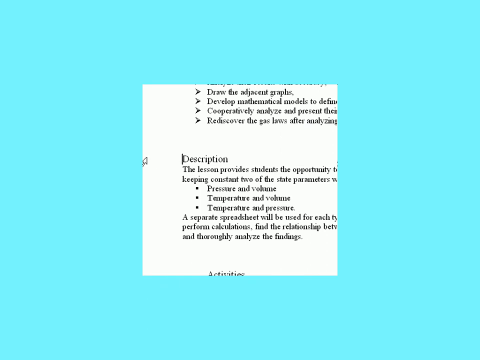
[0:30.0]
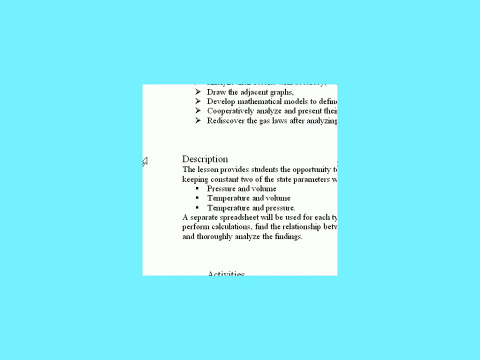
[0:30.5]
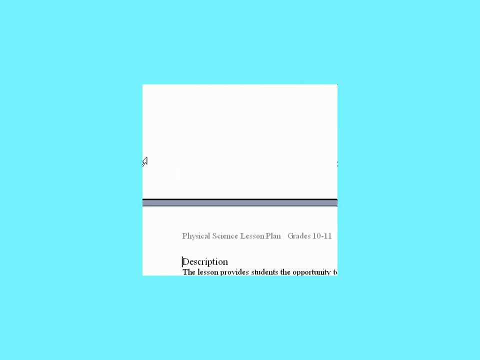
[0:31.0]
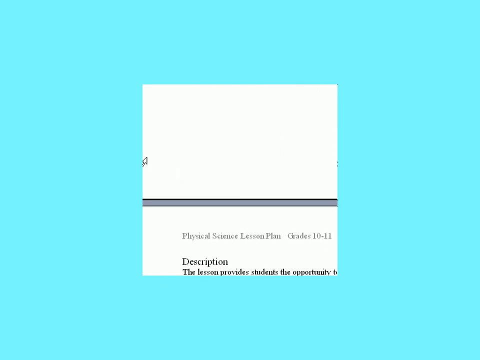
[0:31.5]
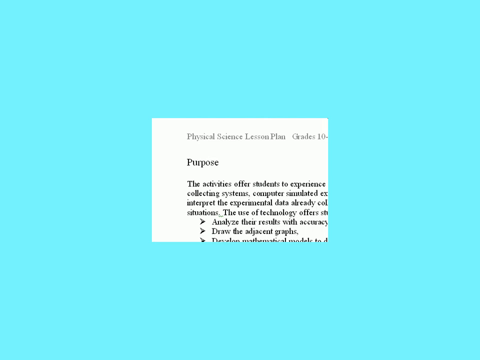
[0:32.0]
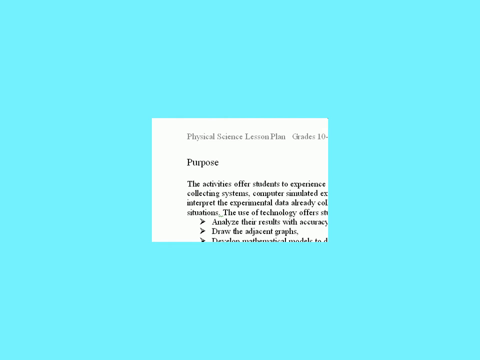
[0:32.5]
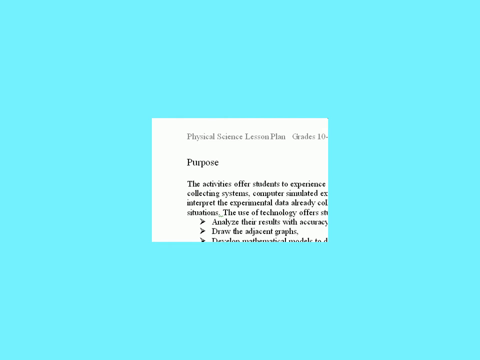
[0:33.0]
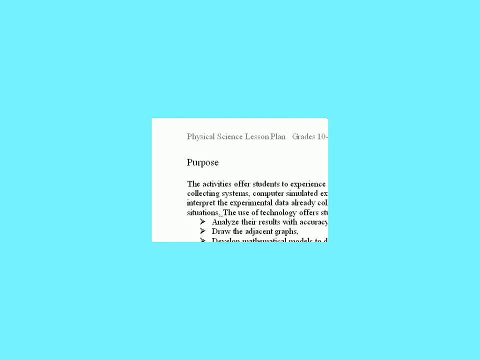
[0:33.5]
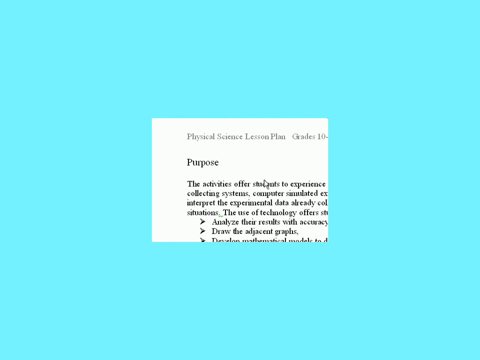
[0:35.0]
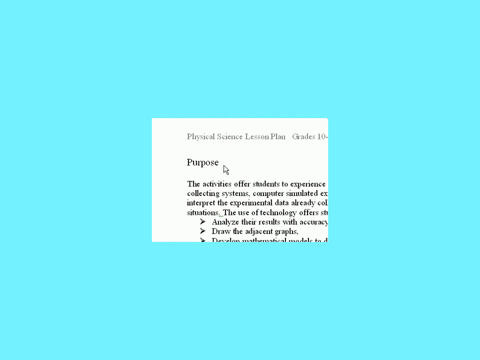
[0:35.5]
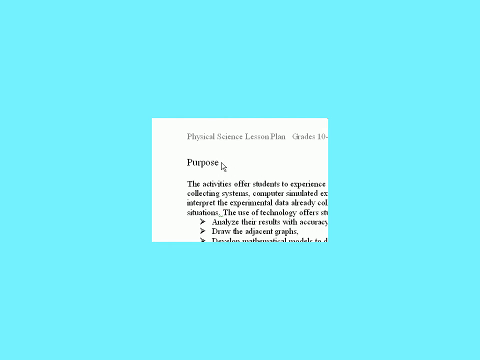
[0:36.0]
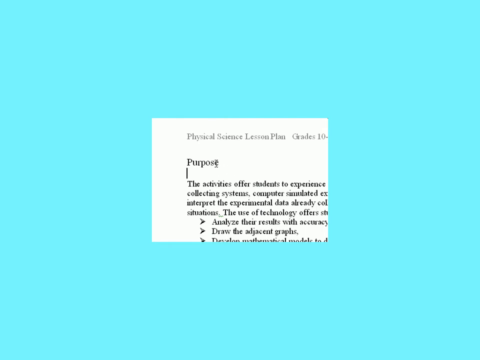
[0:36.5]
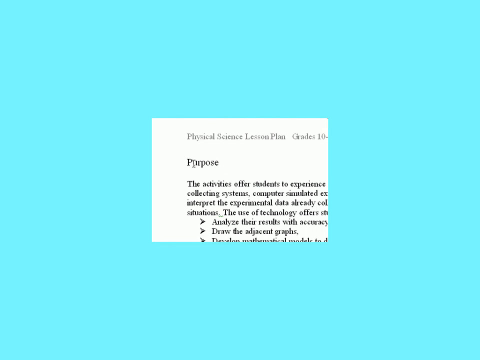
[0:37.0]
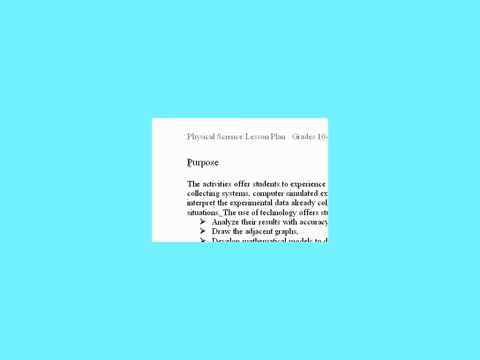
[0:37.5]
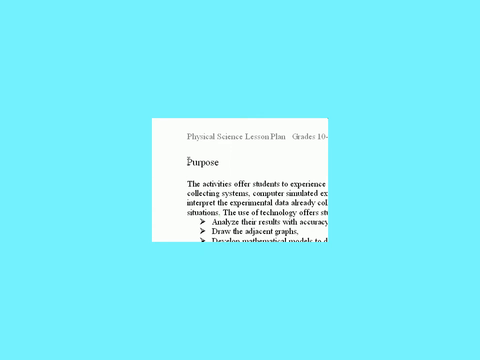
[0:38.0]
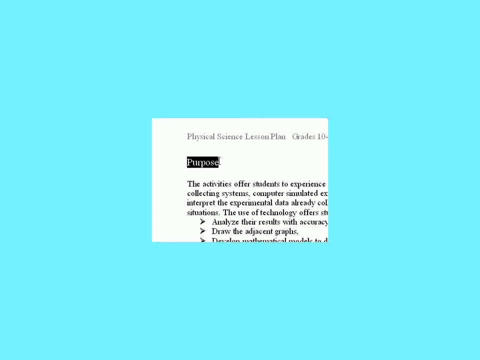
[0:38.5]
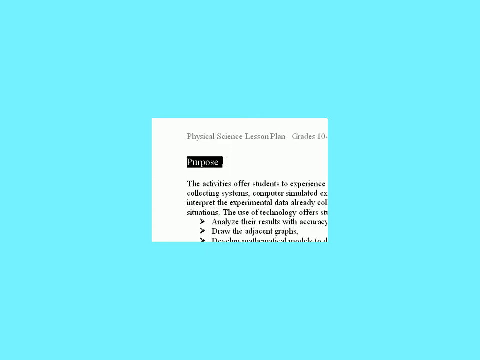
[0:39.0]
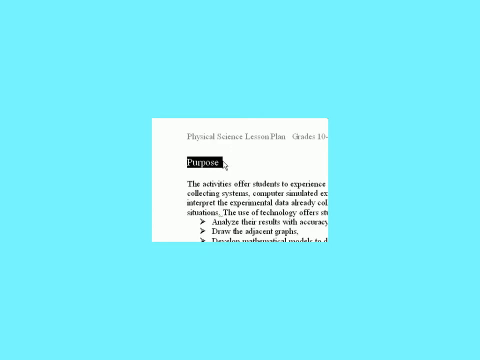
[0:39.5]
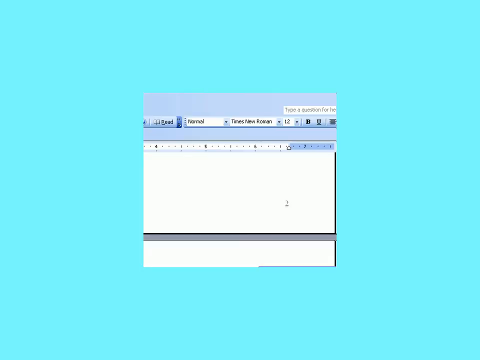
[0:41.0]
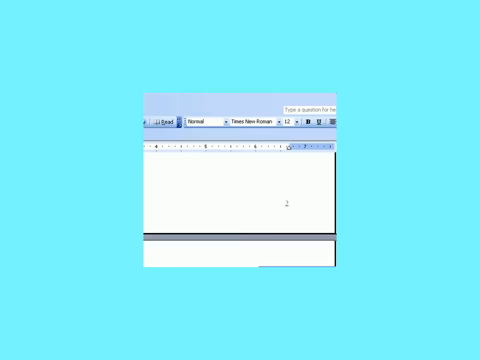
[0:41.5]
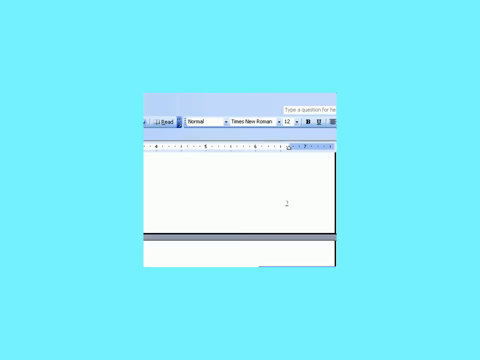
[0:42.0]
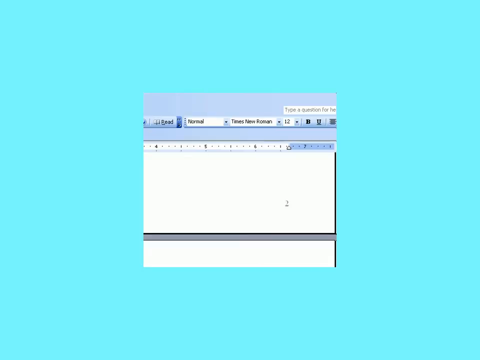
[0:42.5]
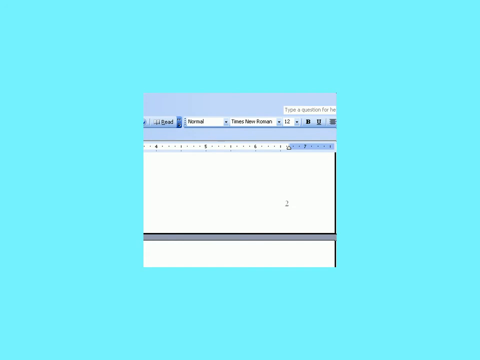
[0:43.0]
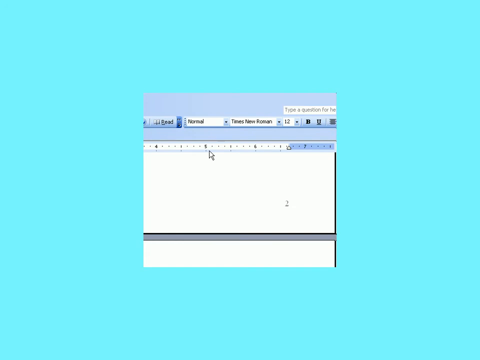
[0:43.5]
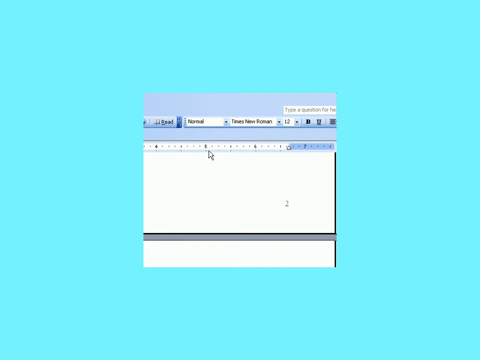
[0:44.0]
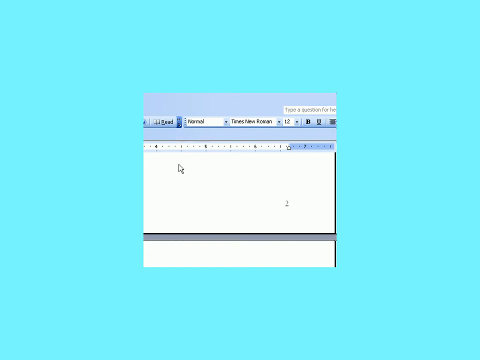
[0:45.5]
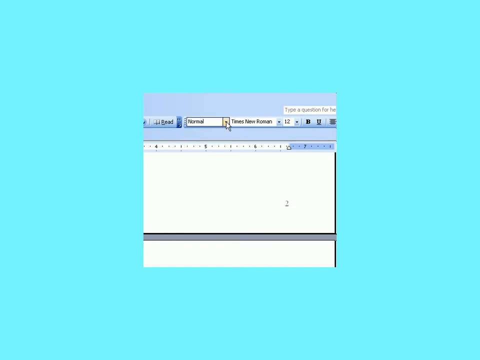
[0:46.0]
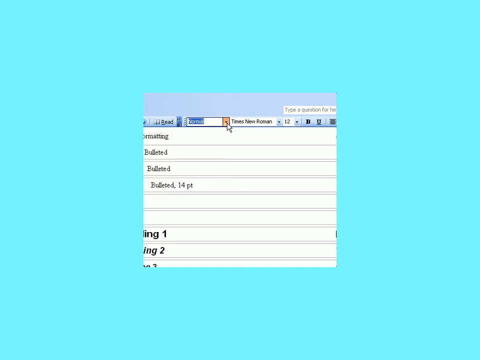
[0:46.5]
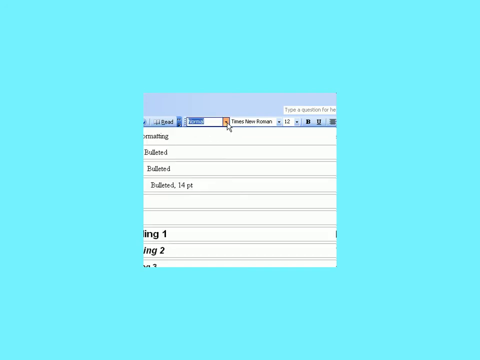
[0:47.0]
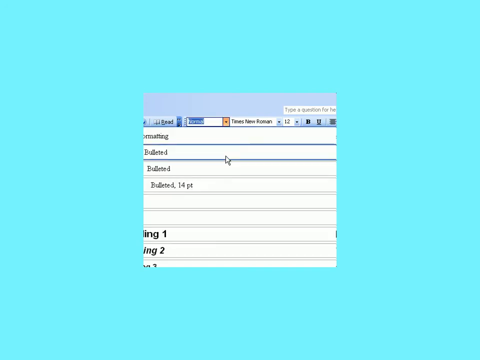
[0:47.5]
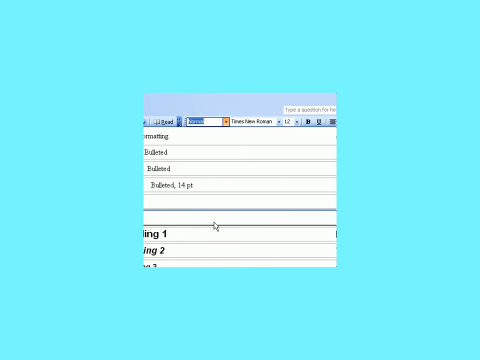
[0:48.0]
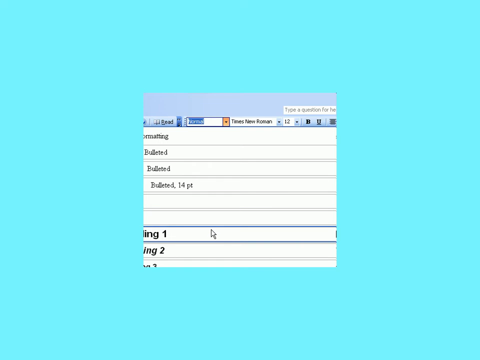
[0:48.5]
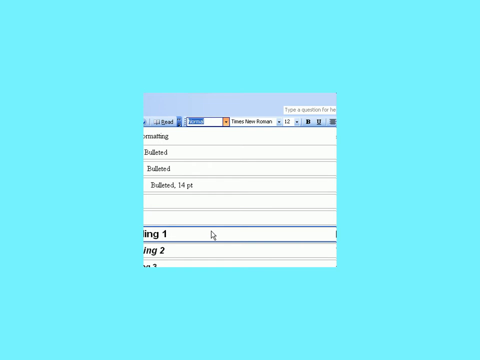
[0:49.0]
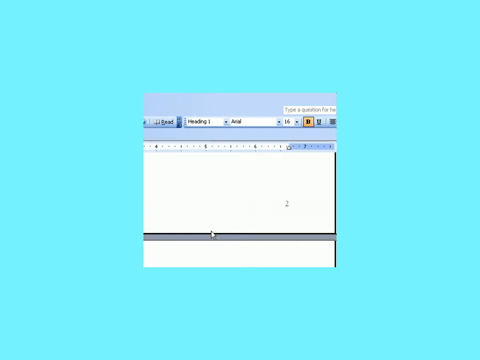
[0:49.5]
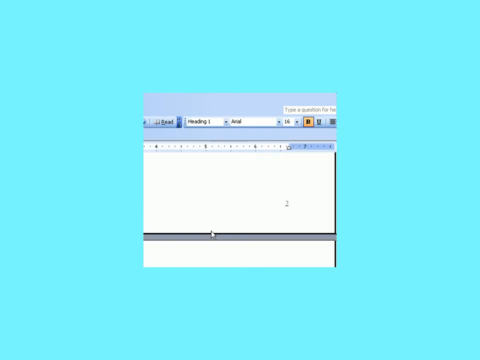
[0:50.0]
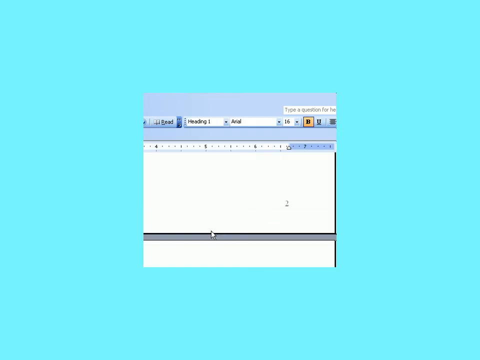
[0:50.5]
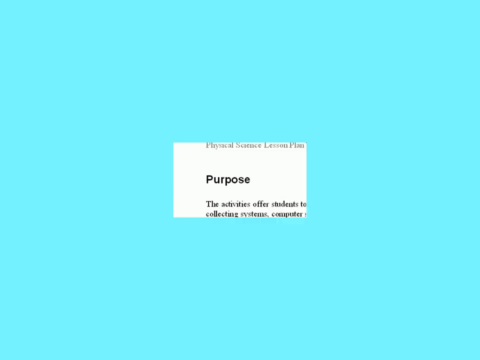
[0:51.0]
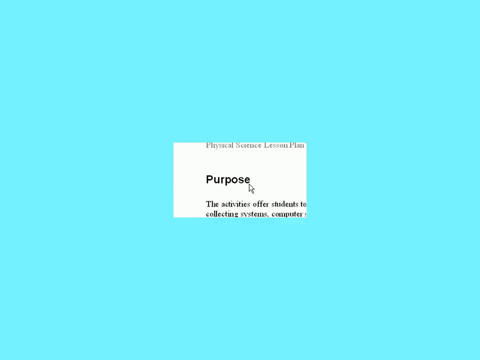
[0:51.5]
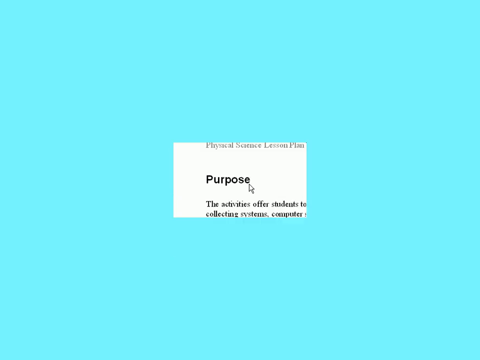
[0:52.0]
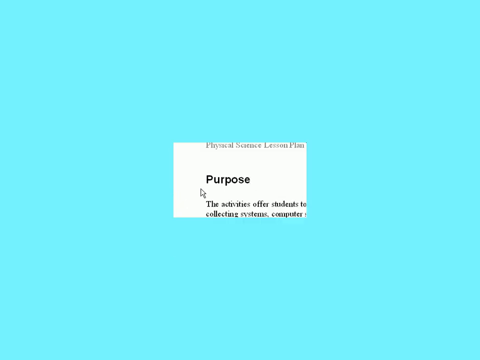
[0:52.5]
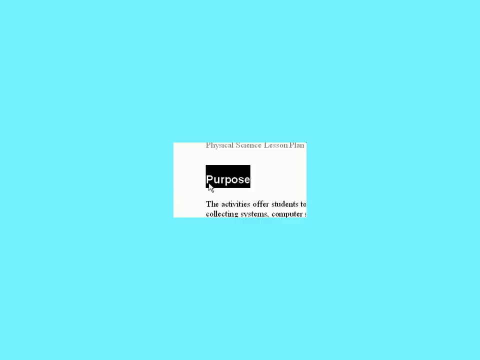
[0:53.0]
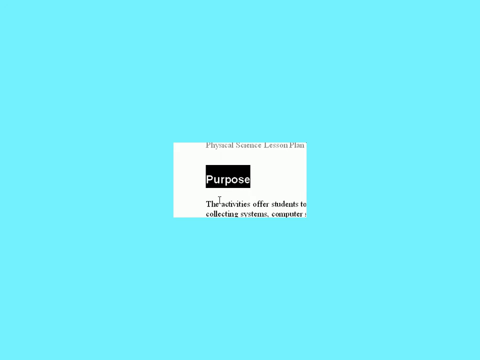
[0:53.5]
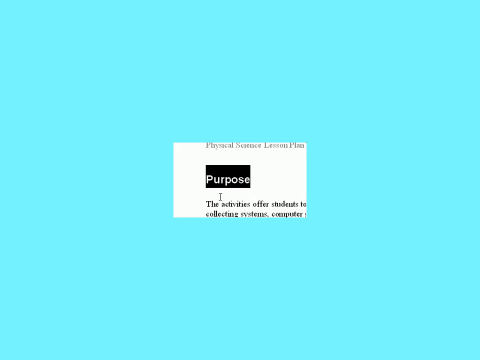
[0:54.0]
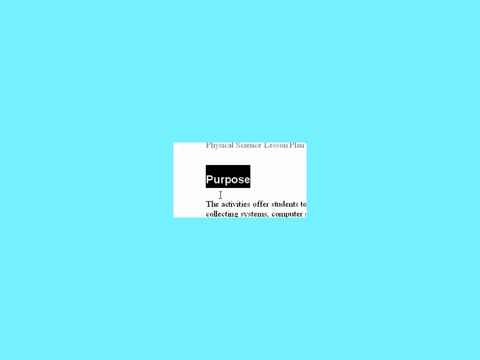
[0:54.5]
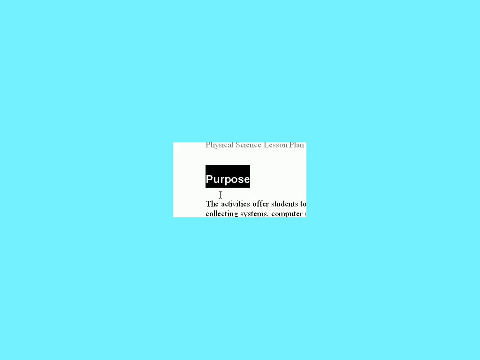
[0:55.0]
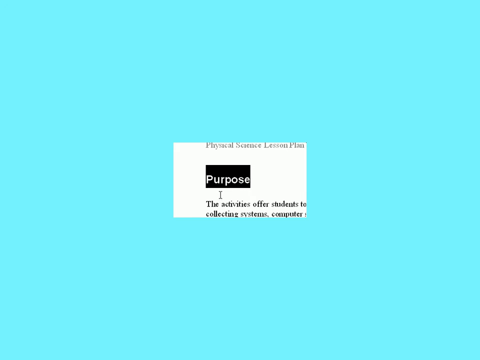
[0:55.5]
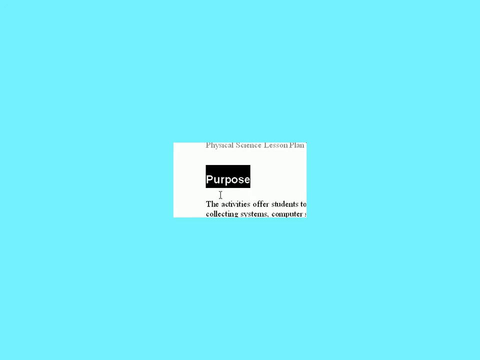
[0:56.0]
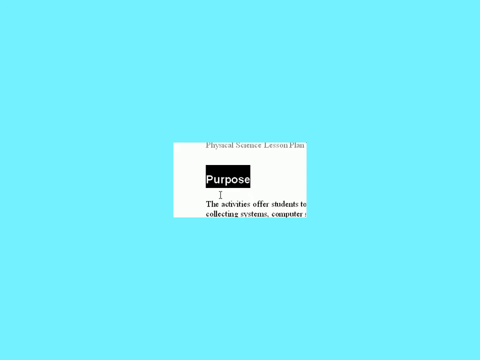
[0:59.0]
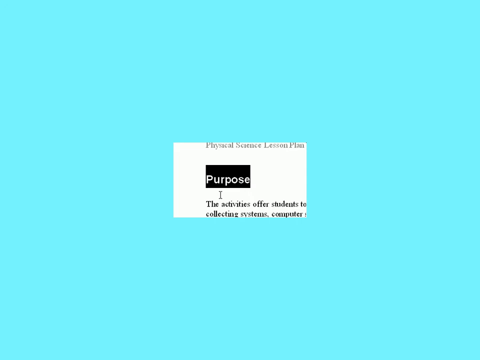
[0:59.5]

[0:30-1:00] The page is blue and white with some writing, and someone is editing the writing. The purpose has been highlighted, and edits are being made, including some colour changes and changes to the writing. The headline now looks a little bigger and bold to indicate that it is a headline.